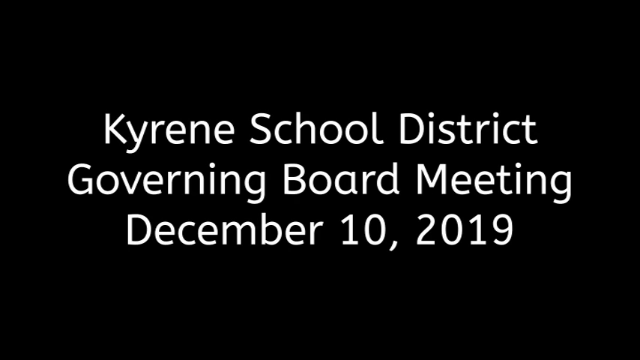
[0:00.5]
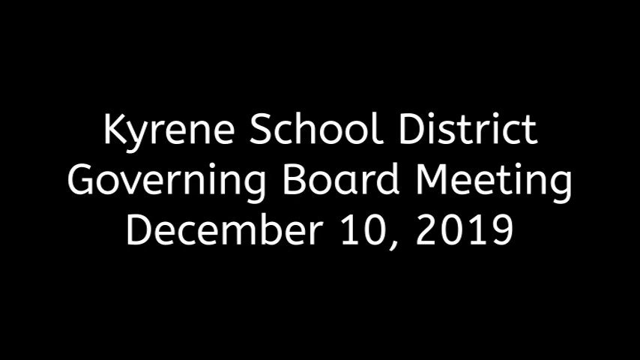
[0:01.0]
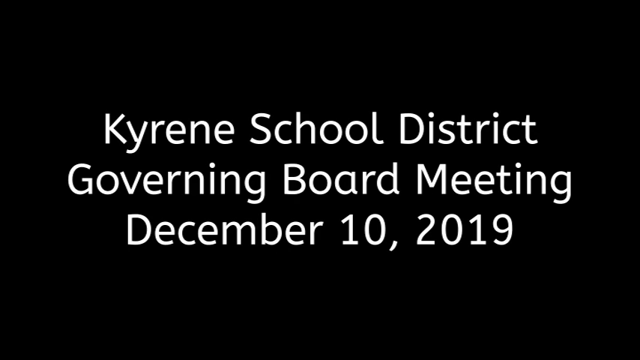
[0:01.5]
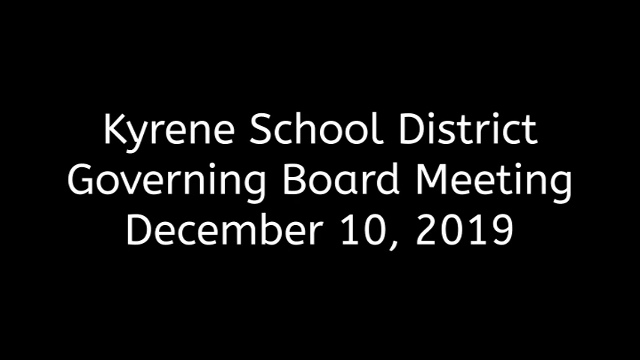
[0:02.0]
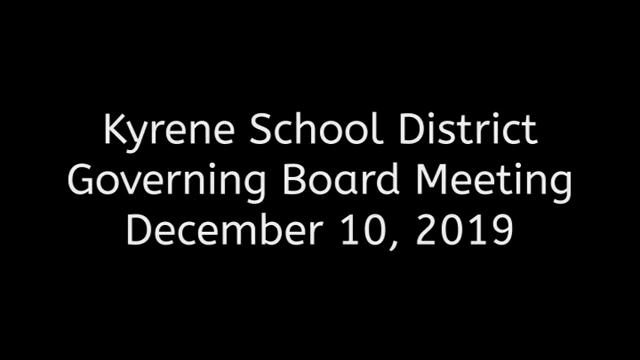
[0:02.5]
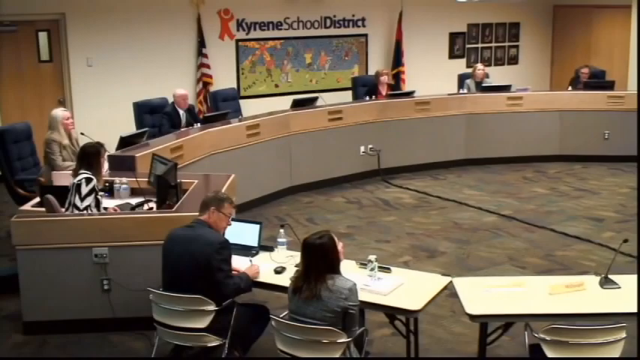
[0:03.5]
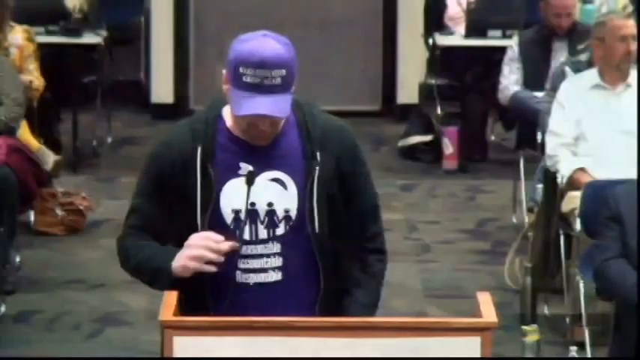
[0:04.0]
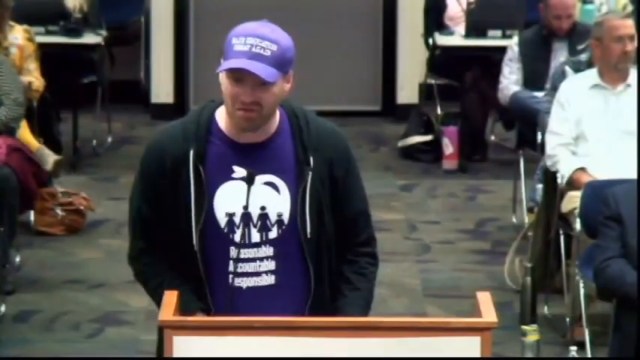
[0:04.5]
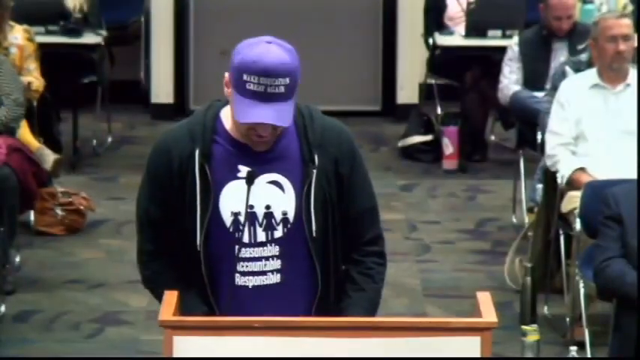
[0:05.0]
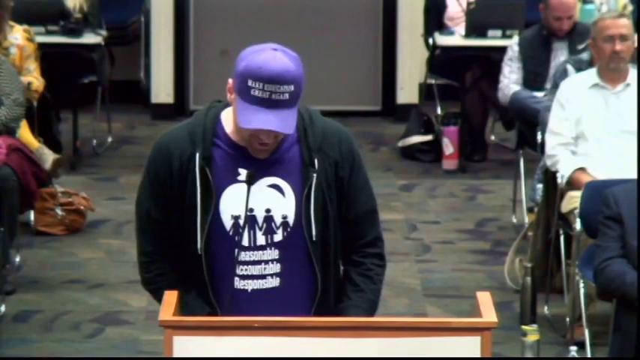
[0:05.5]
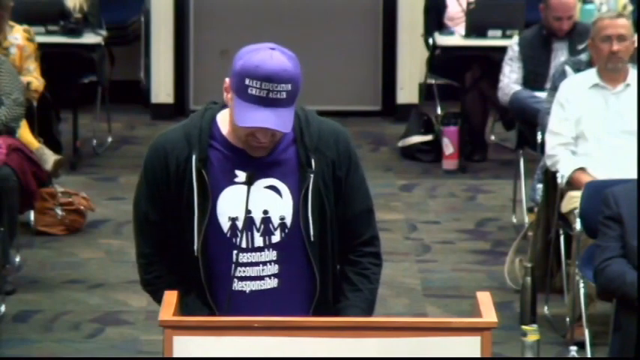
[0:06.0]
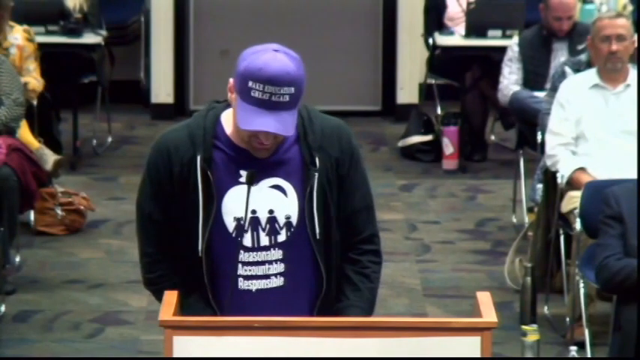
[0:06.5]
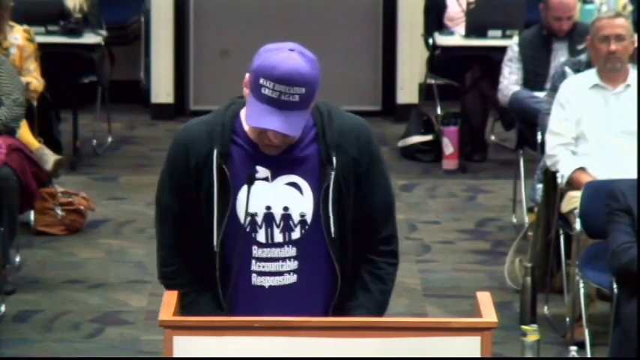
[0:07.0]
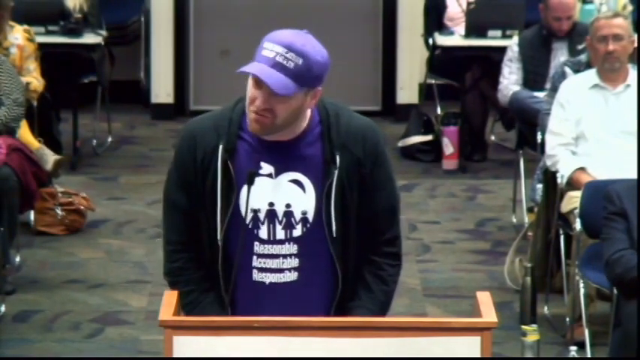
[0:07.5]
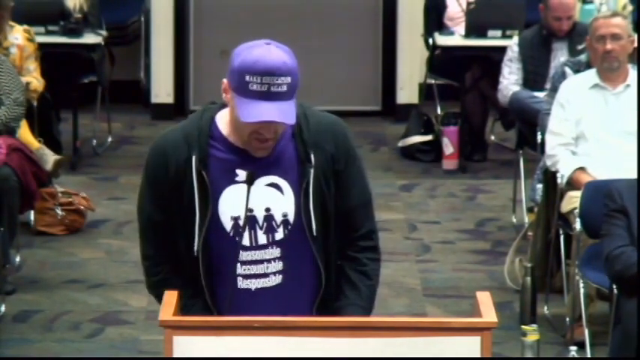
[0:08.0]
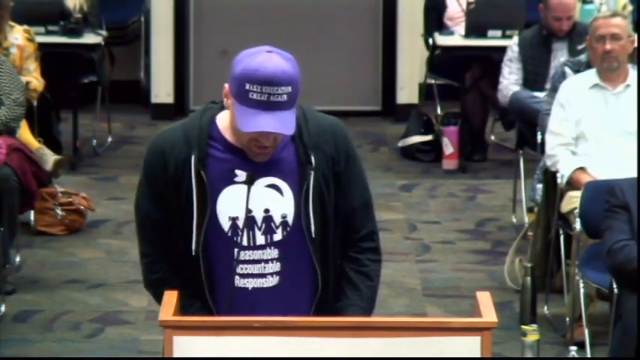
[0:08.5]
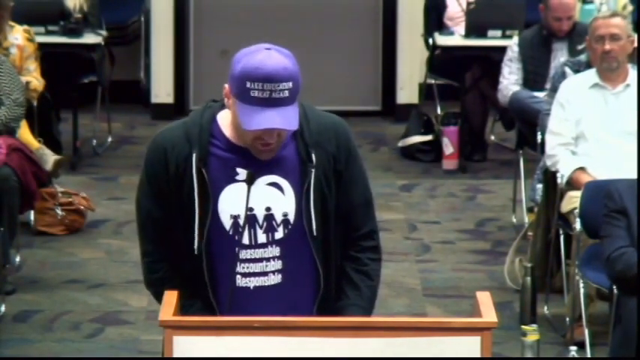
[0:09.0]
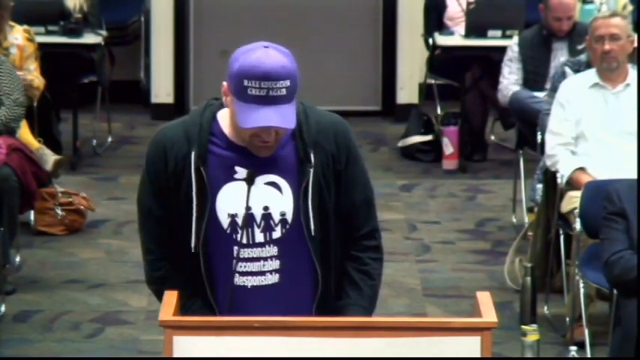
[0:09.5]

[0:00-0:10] A Kyrene School District Governing Board meeting takes place on December 10th, 2019. A white man in a purple shirt, a purple hat and a black hoodie is standing up and talking. Other people are in the building with him, some sitting behind him, and board members are sitting at an oval-shaped table.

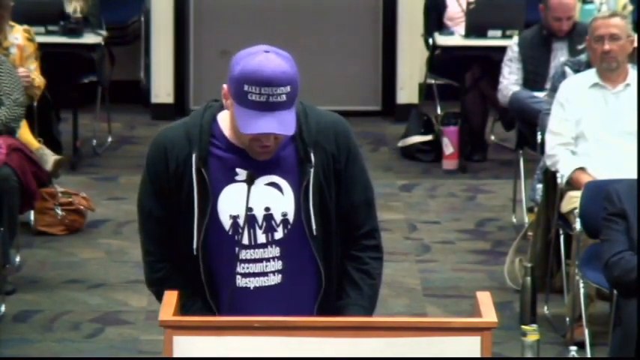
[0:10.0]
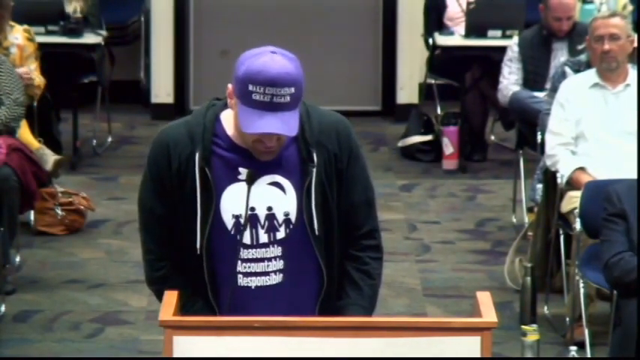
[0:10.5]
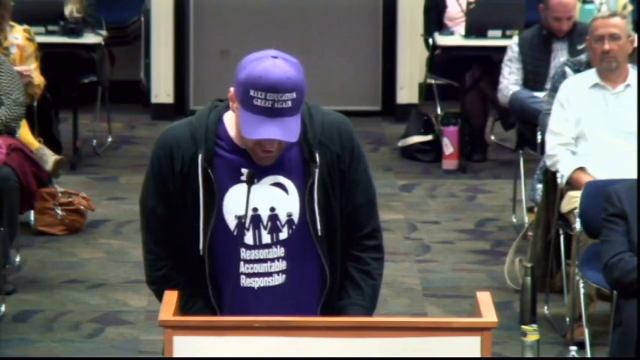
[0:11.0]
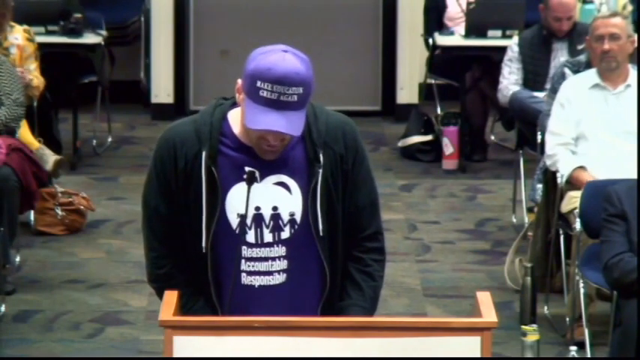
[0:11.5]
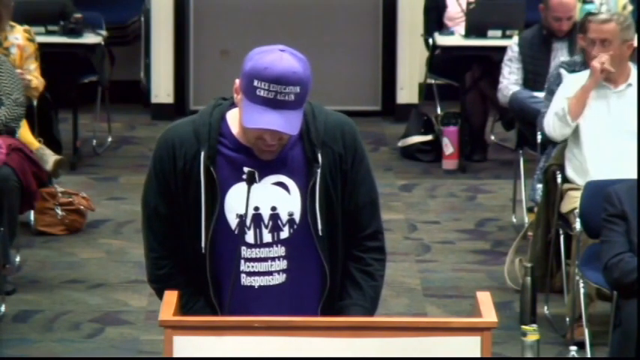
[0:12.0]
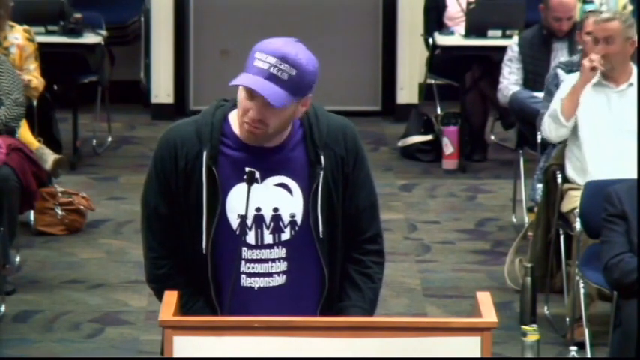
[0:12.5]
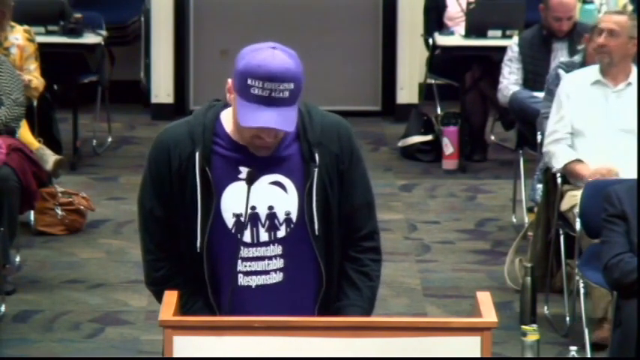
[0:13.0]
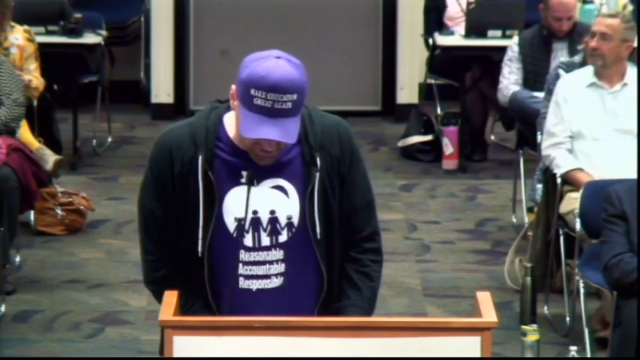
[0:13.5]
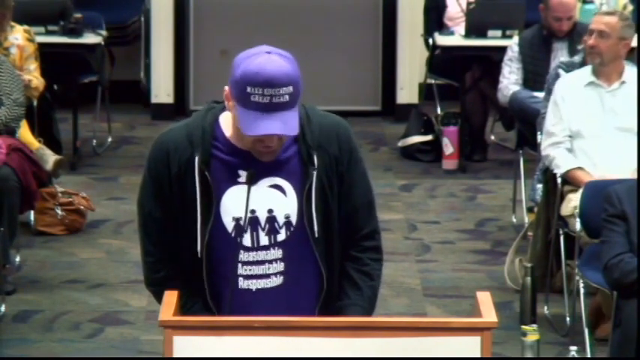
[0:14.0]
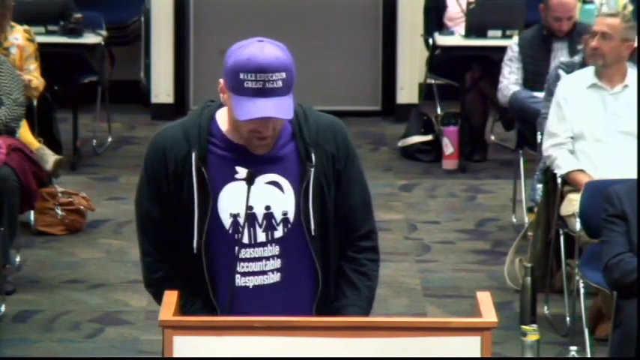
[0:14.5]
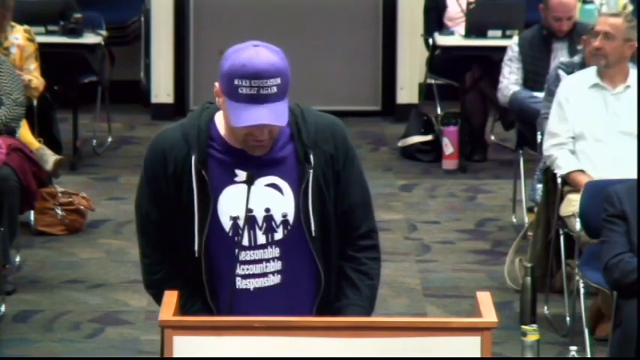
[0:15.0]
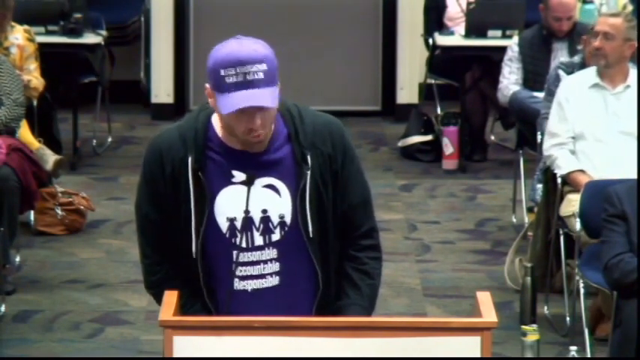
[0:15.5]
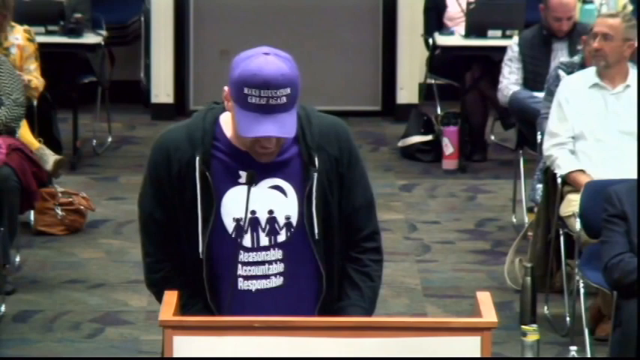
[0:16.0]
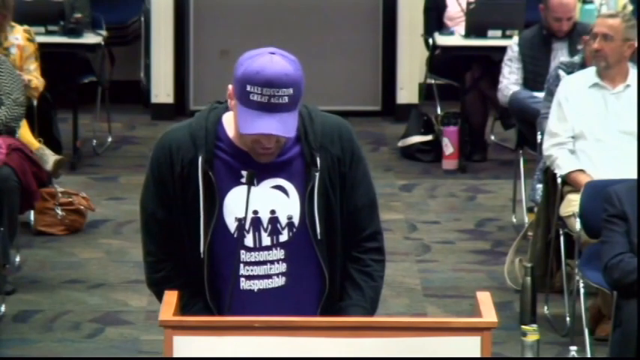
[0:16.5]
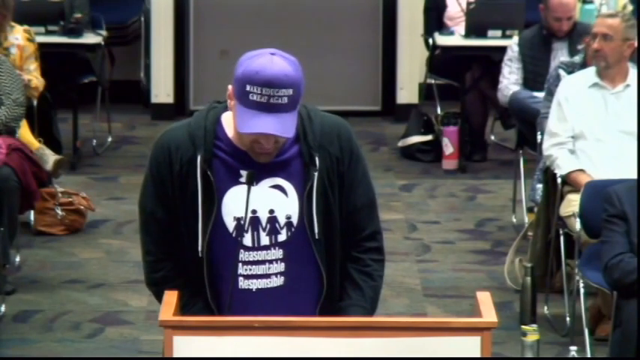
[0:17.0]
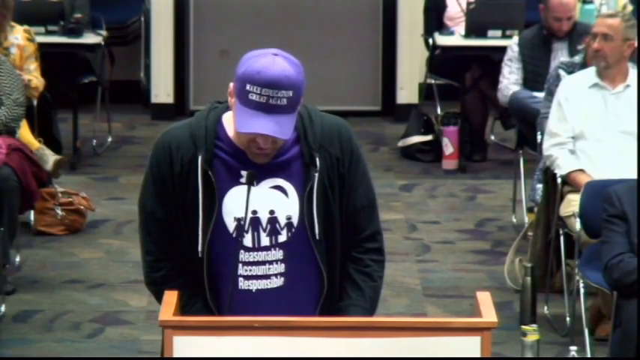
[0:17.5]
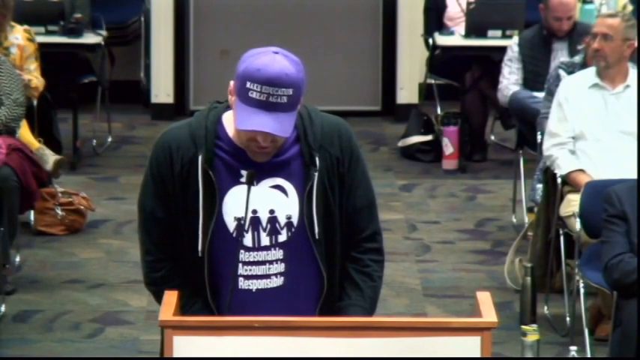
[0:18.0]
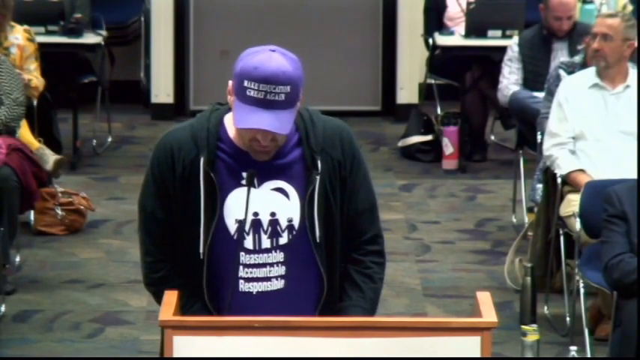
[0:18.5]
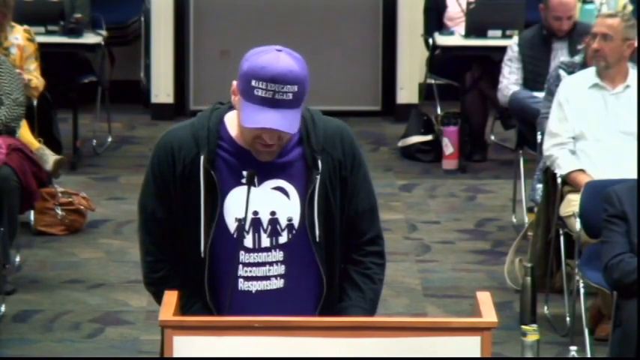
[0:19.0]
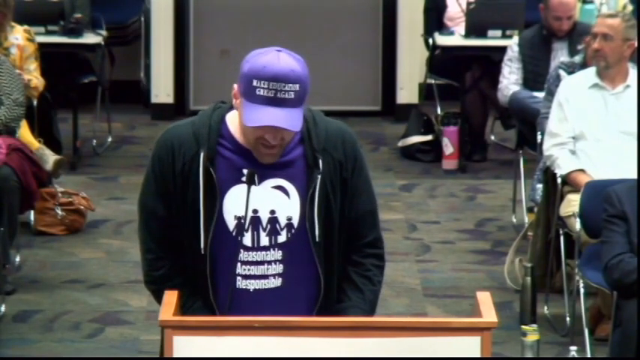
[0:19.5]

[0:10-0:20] A white man is talking with other people around him. He wears a purple shirt, a purple hat and a black hoodie. His shirt has a drawing of a white apple with a drawing of four people in purple inside it that look like a family: a mother, a father, a daughter and a son. Below the apple are the words "reasonable, accountable, and responsible." His hat also has white lettering on it. People are sitting down on both his left and his right in the room.